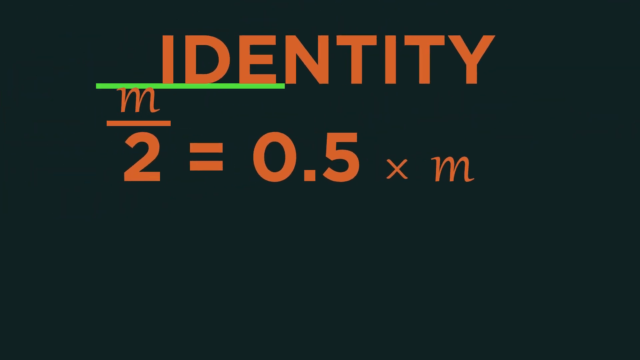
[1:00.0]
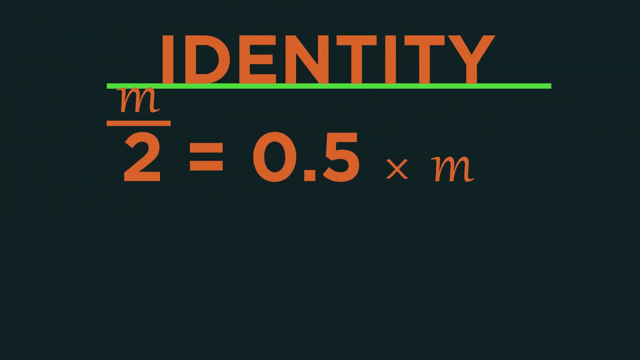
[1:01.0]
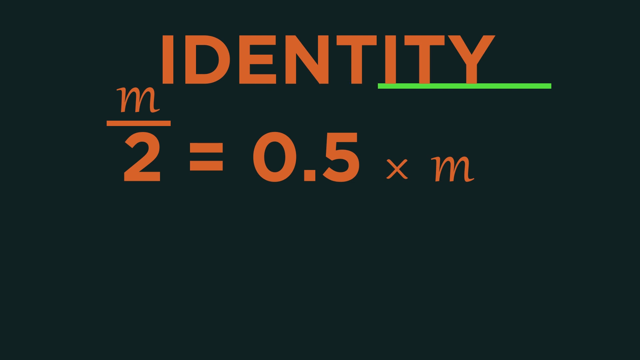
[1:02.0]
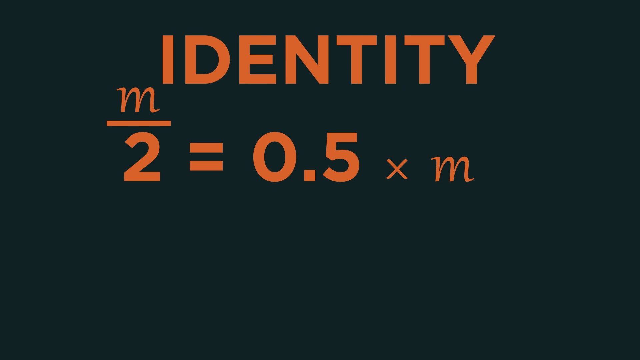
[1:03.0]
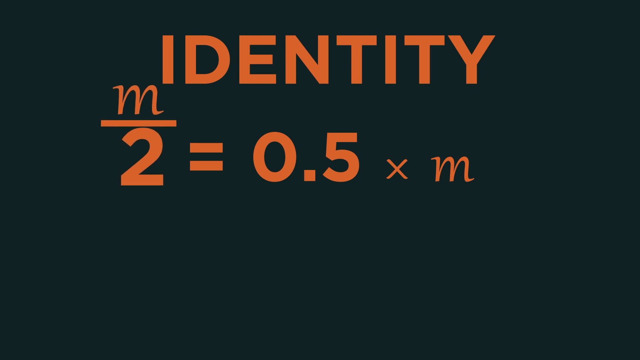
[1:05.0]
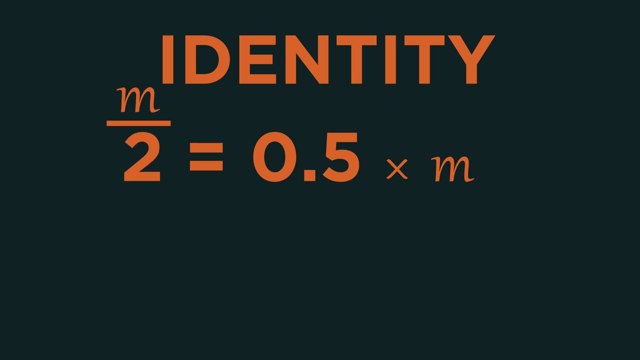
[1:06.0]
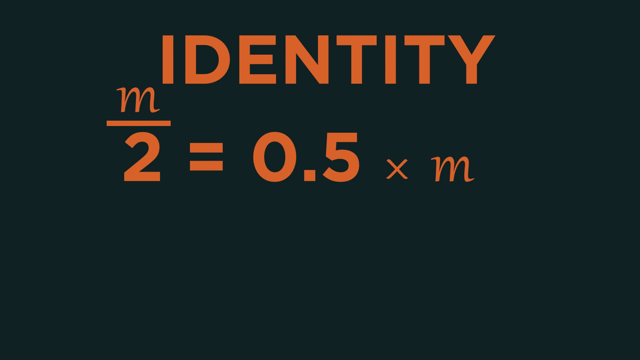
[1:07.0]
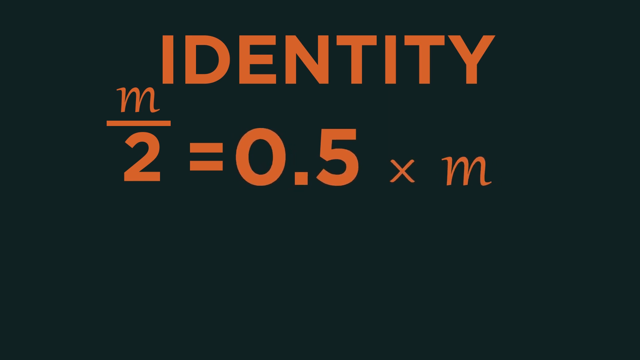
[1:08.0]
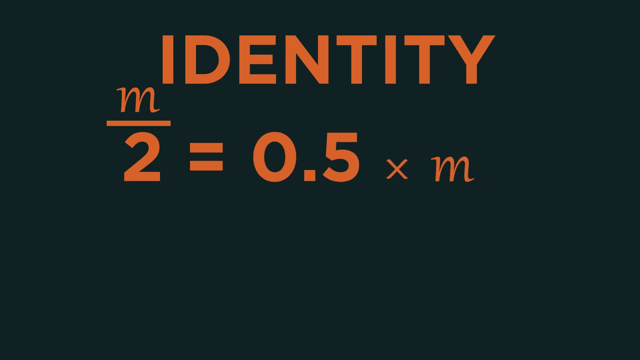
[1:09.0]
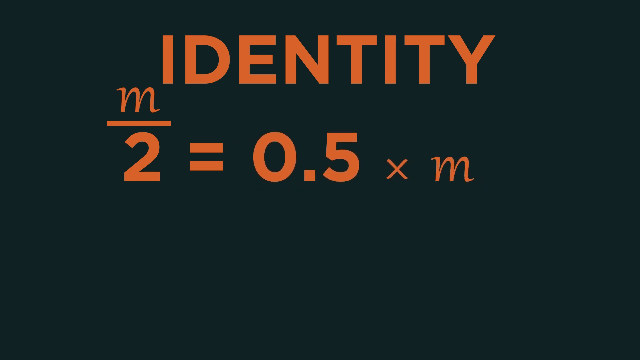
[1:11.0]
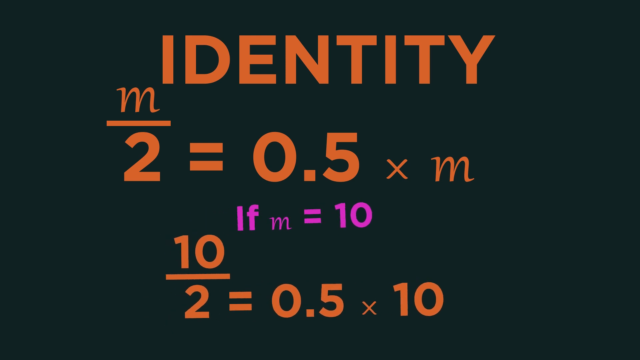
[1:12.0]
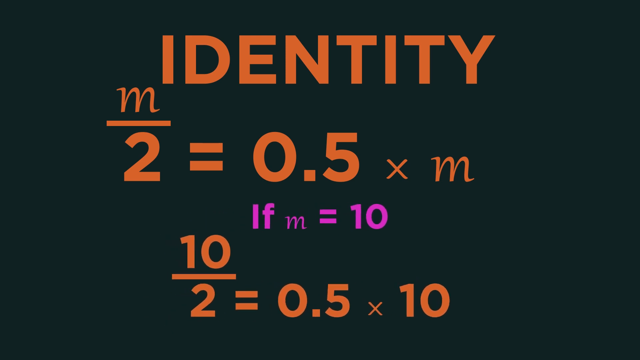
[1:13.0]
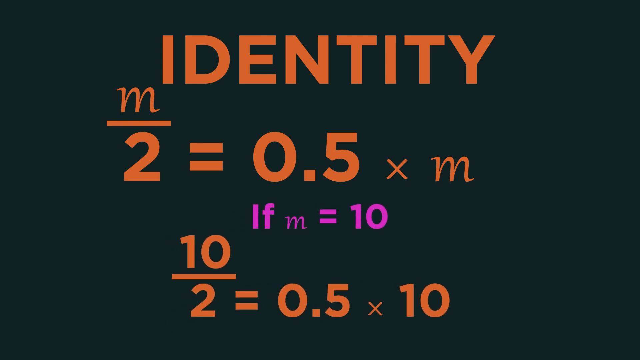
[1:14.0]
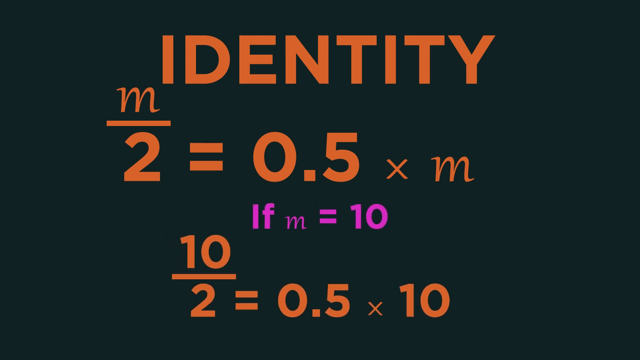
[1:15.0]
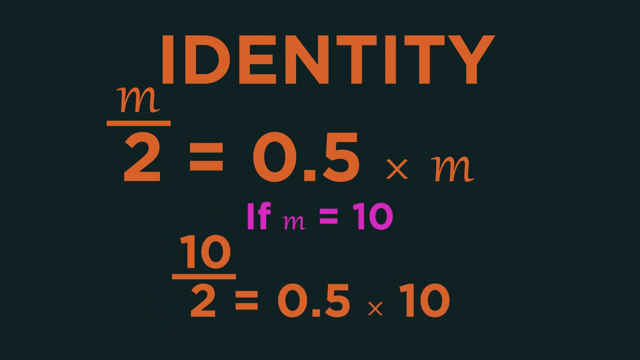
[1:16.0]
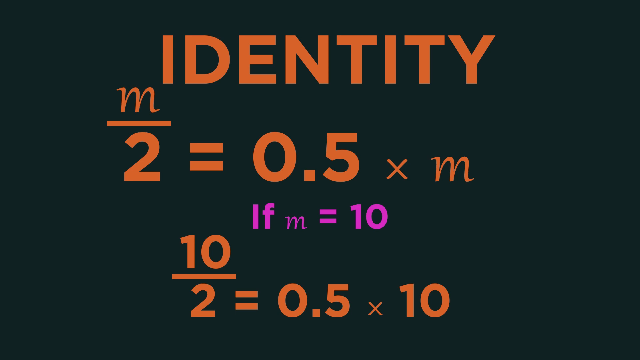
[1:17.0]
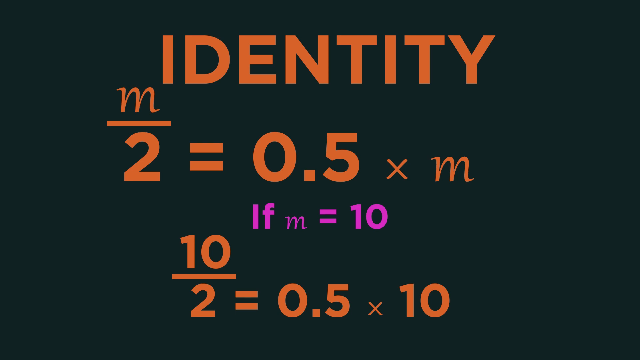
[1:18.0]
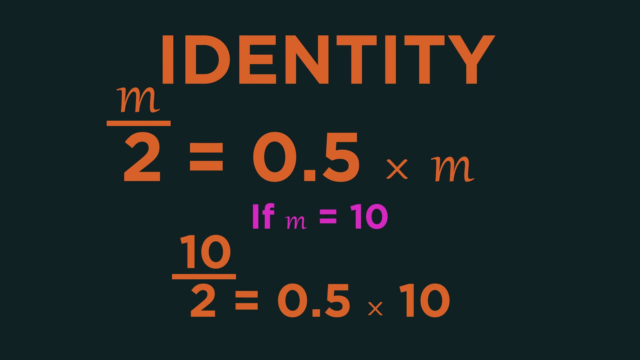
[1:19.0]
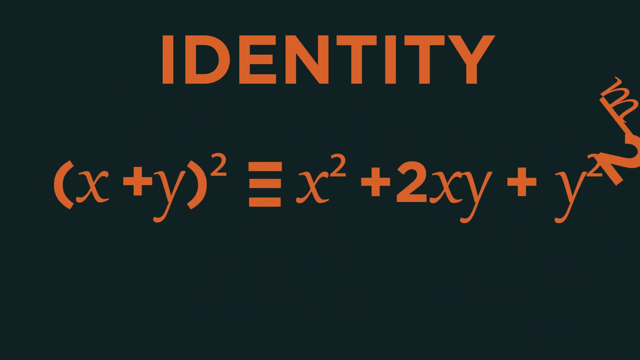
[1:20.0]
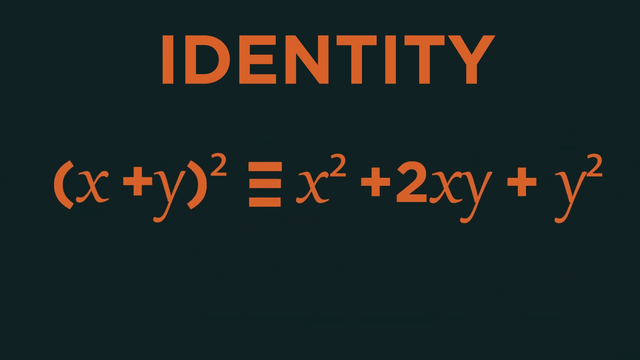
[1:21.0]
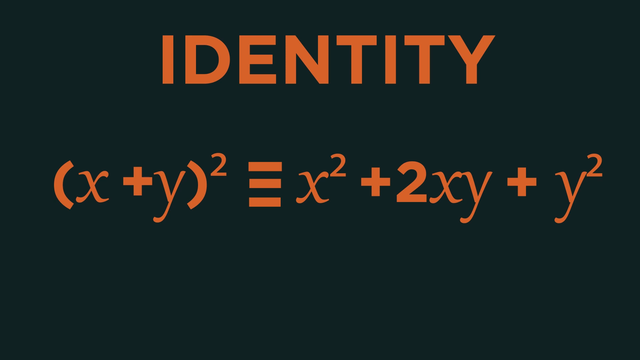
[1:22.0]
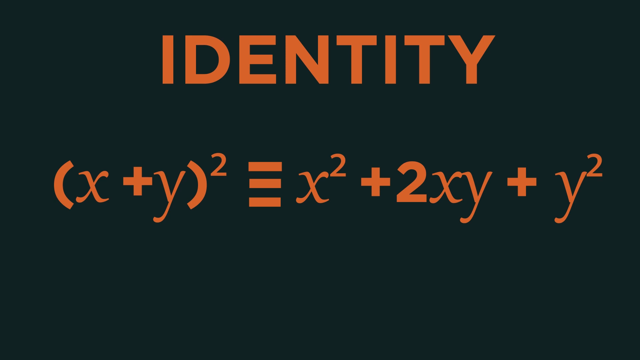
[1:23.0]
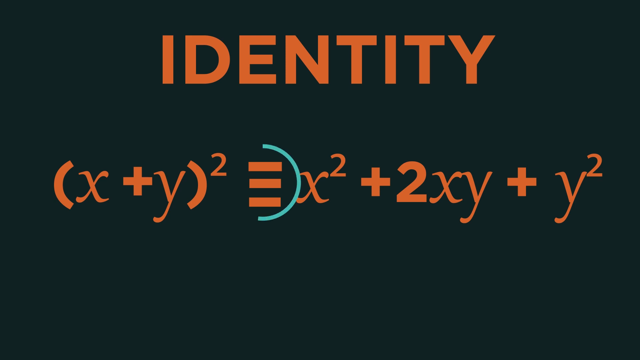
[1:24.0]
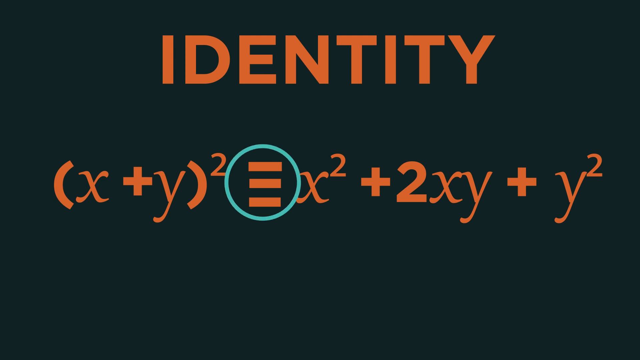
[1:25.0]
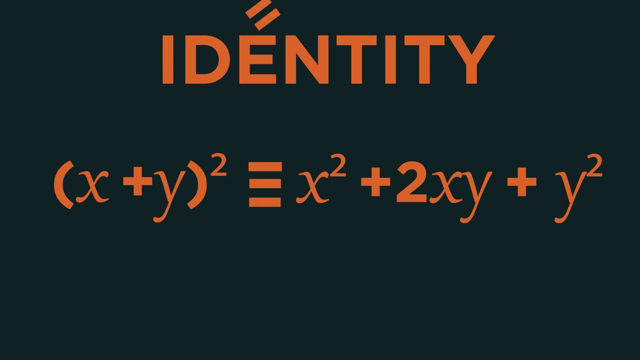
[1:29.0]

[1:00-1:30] "Identity" appears in orange text on a black background, underlined by a green animated line moving to the right. It shows "m over 2 equals 0.5 times m". More text slides in at the bottom, with "if m equals 10" in pink, and below it in orange, "10 over 2 equals 0.5 times 10". A symbol of three lines that looks like an equal sign is circled and then swapped out for an equal sign. More text swipes the previous text away to the right and comes in from the left: "x plus y squared equals x squared plus 2xy plus y squared".